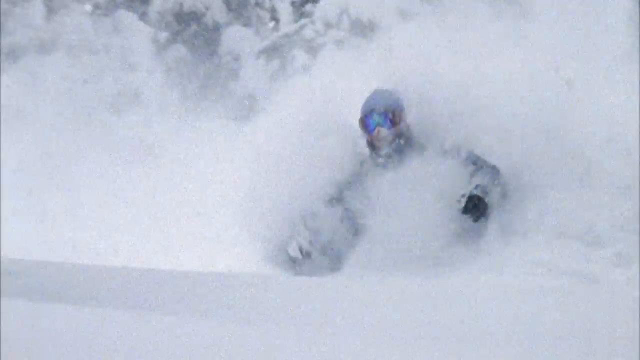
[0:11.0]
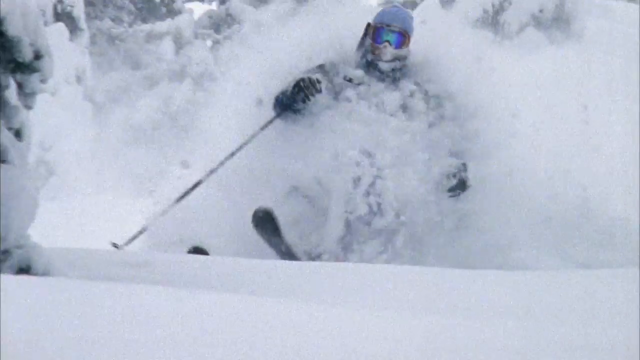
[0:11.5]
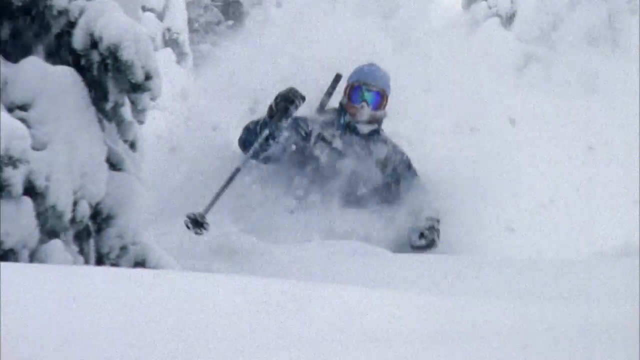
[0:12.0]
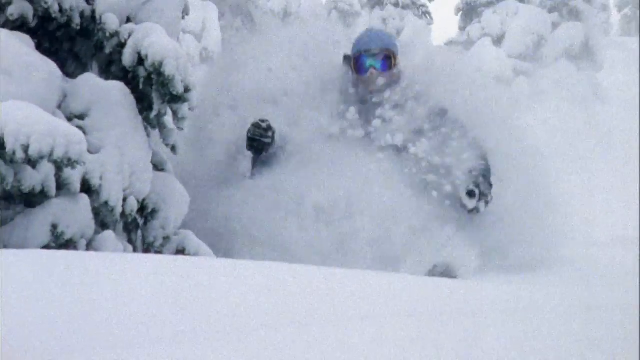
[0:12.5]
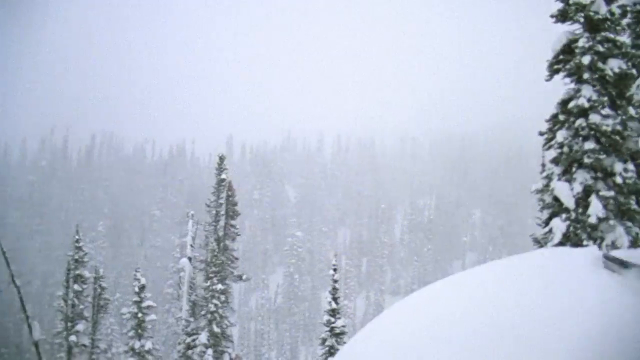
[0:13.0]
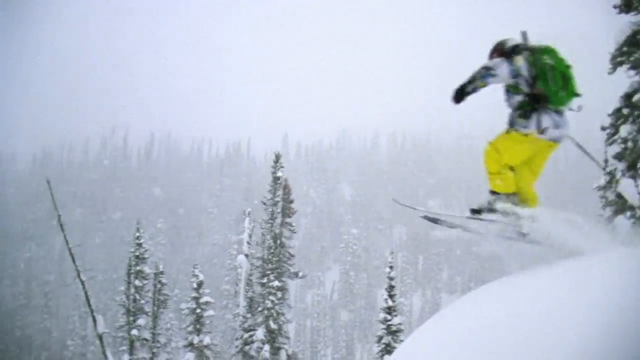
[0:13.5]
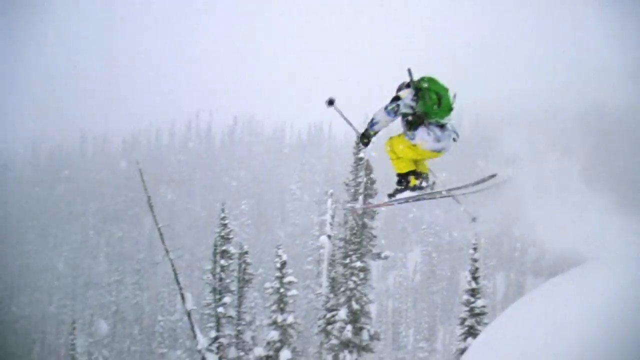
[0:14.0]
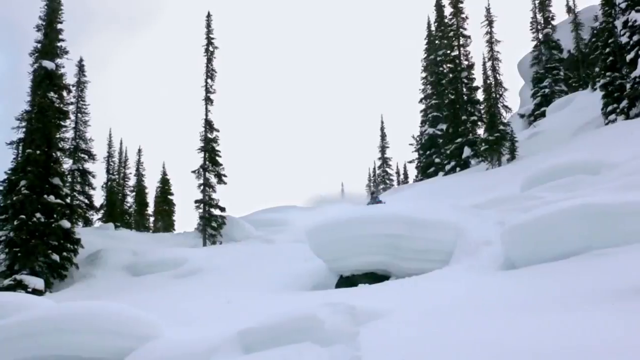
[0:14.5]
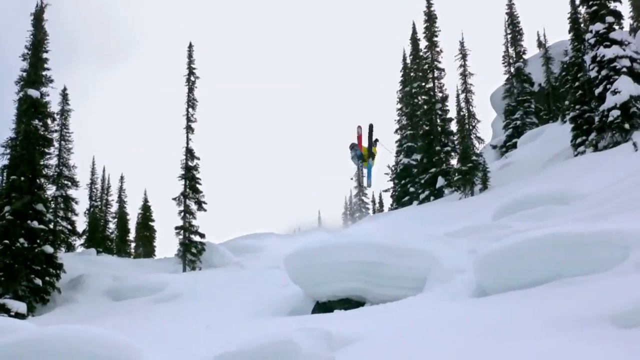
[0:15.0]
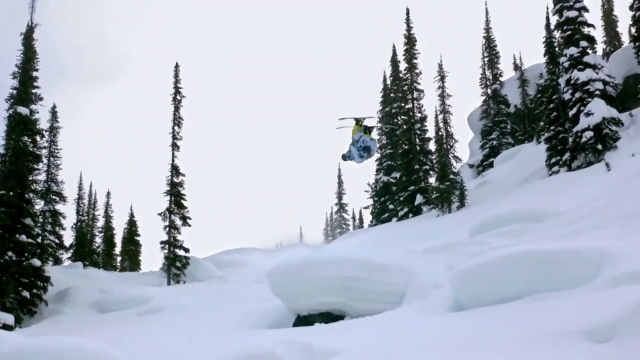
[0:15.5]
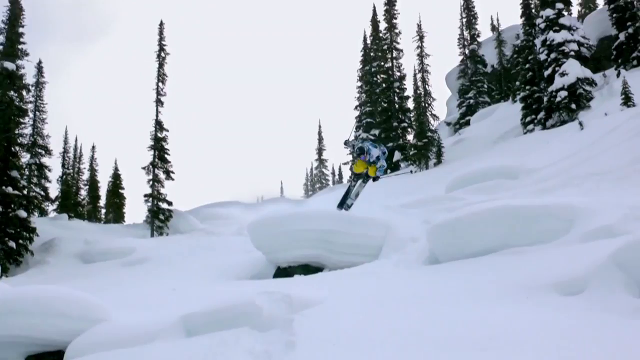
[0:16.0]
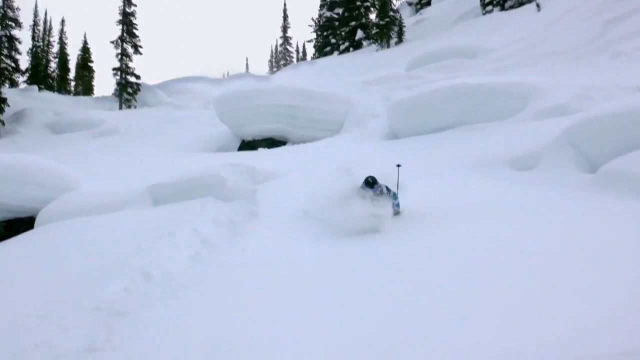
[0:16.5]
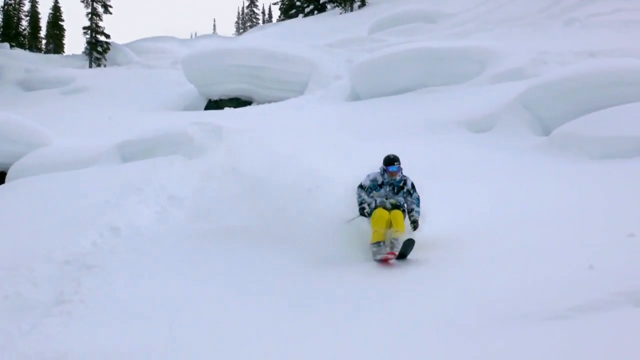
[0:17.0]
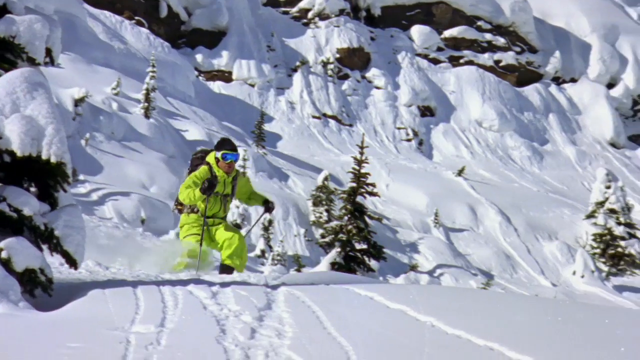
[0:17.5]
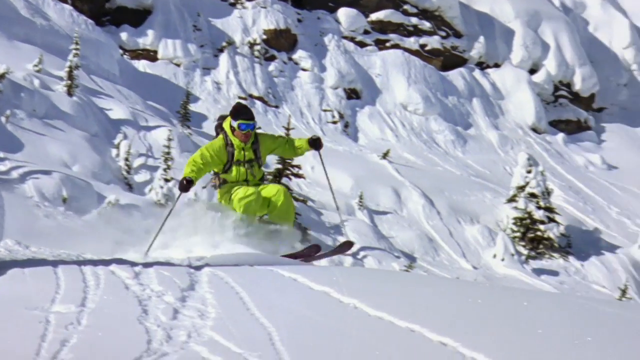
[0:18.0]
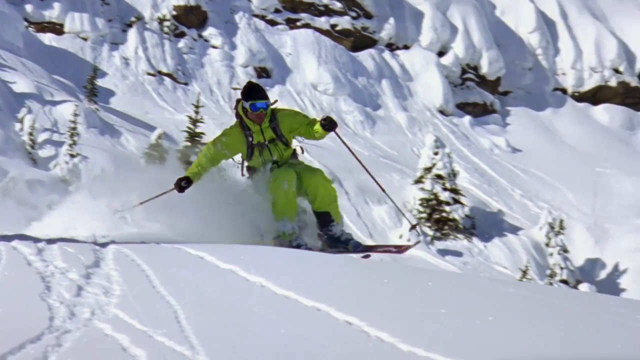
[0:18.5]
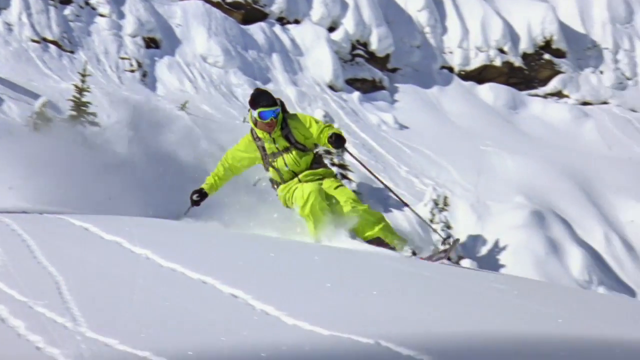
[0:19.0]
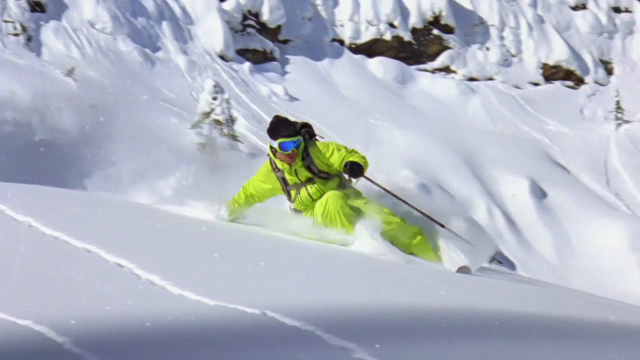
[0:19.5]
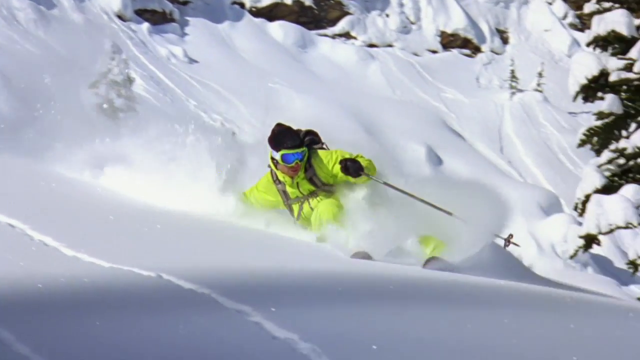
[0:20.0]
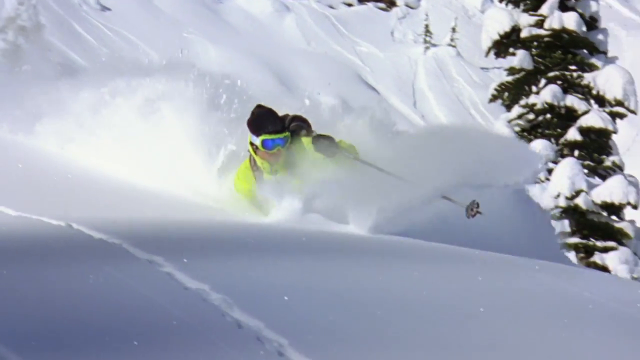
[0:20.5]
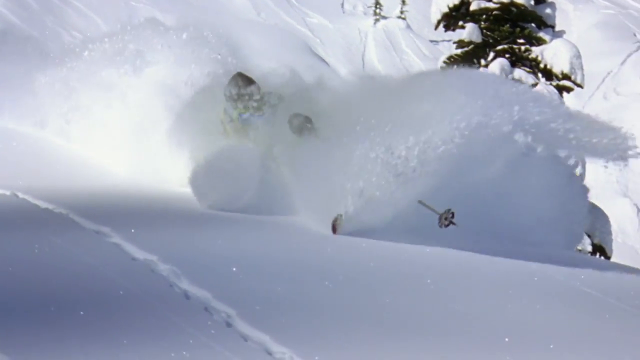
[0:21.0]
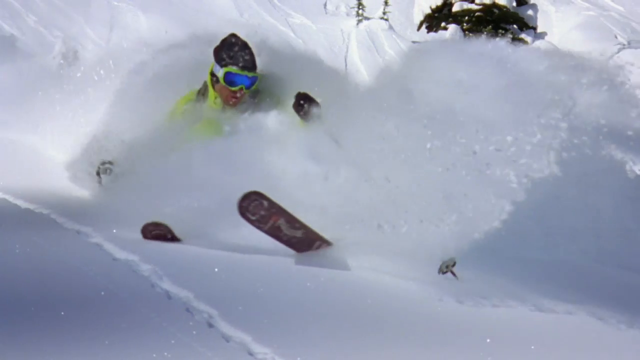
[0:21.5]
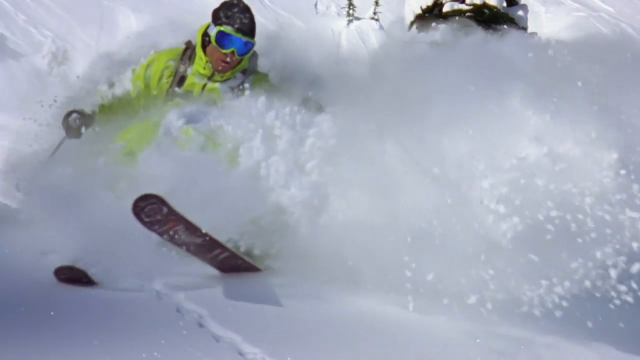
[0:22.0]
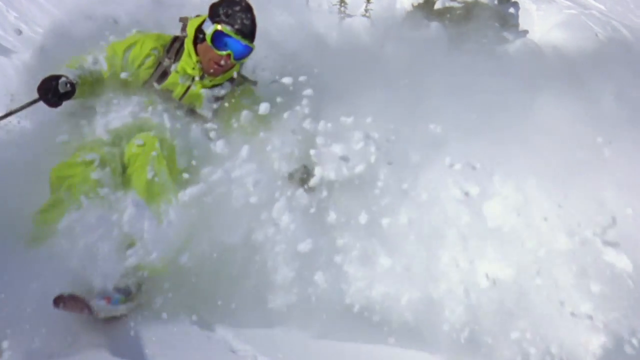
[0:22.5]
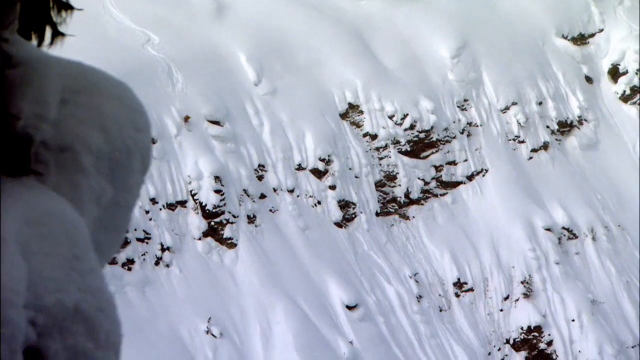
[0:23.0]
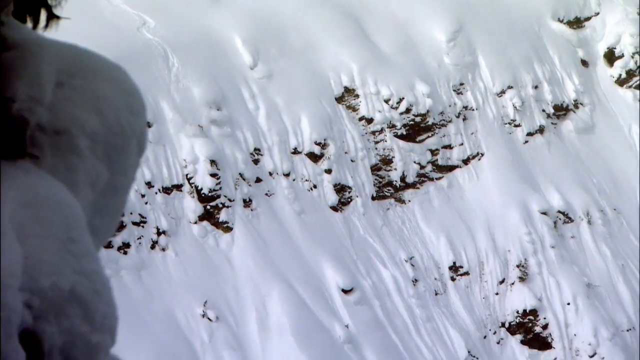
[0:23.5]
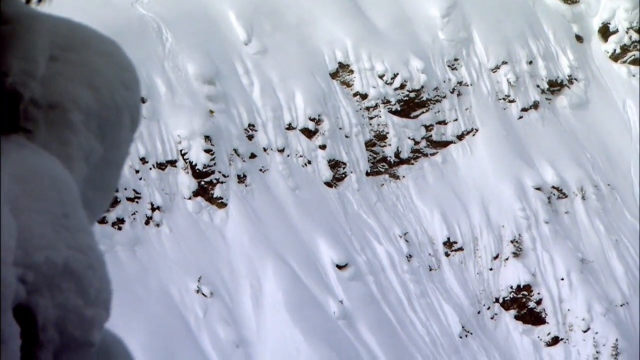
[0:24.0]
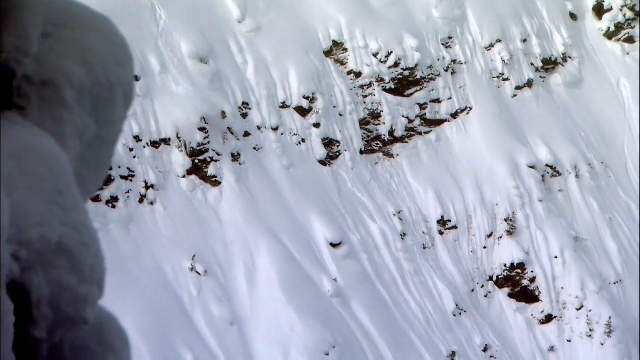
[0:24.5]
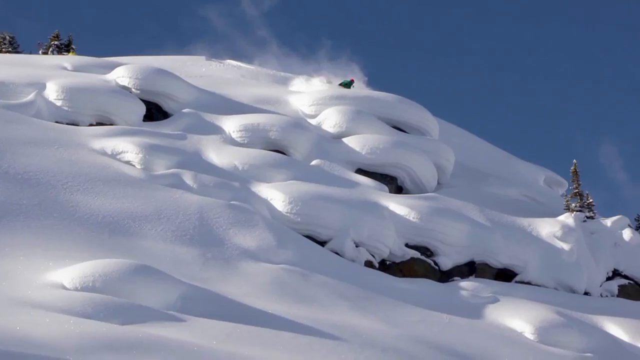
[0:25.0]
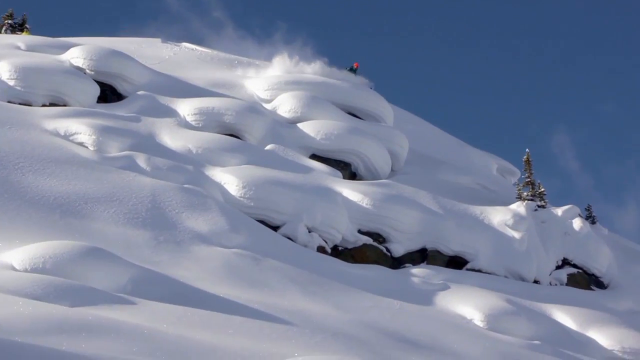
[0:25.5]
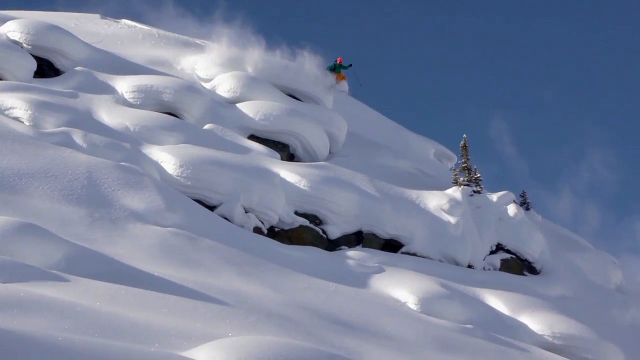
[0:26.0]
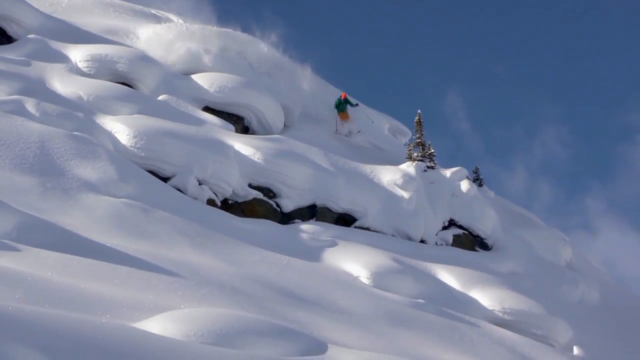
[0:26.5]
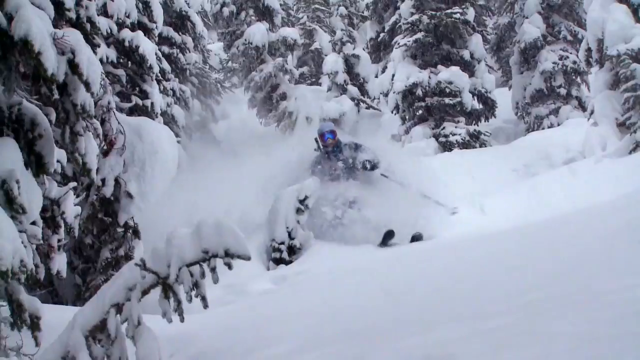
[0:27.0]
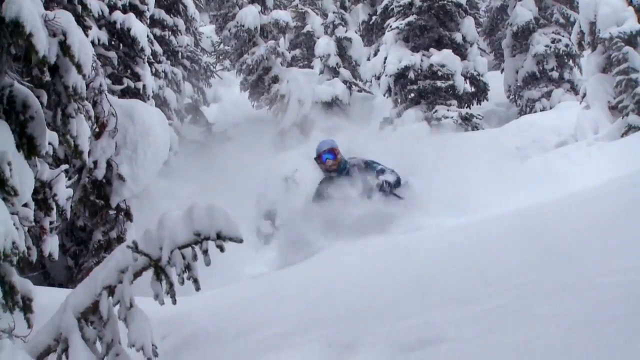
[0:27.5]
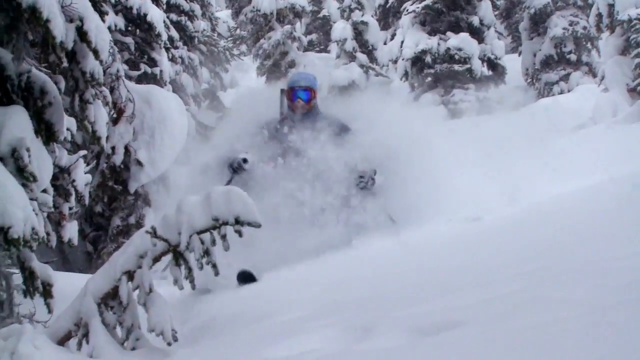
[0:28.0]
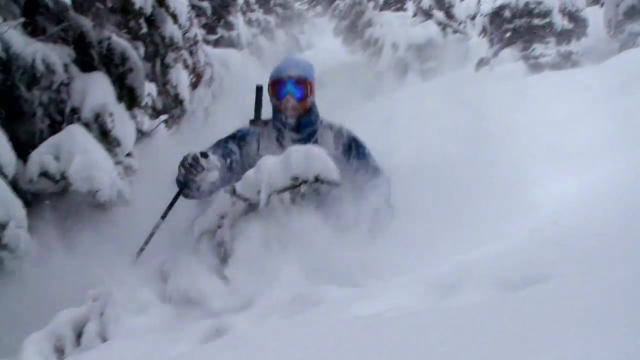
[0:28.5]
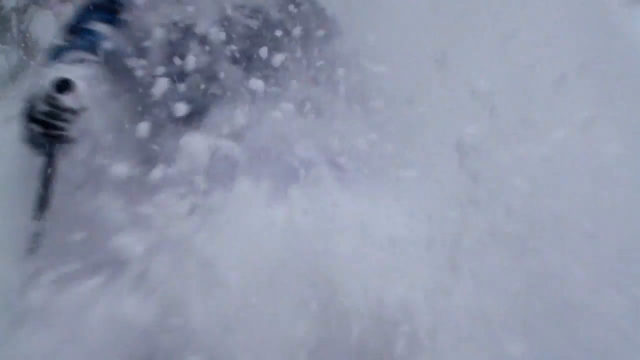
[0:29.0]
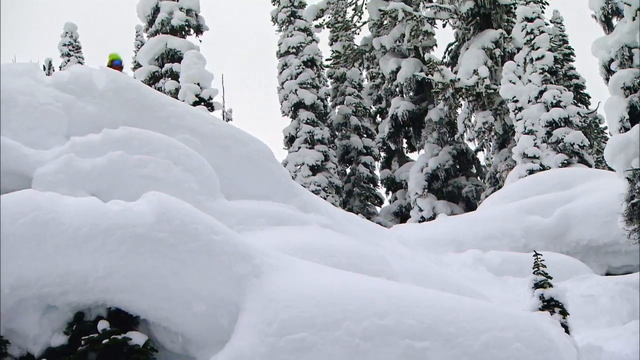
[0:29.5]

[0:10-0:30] Someone skis through the snow, apparently coming down a hill. They wear a blue visor over their face and hold a ski stick in each hand to help them navigate through the snow. Snow crashes against their body and gets kicked up into the air. In the next shot, a skier jumps off a cliff from right to left, wearing yellow pants, a white jacket and a green backpack; as they jump, the ski sticks are pushed behind them. The same skier then does a backflip off a jump and lands. Next, a different skier in an all neon green suit with a blue visor and a black beanie goes down a hill in slow motion, moving to their left with their toes pointed to the right at about a 45-degree angle, seemingly to brace and slow themselves down and to turn to the right. Another skier is then seen from really far away going down the snowy mountain, so small they look like an ant. Then another skier jumps off a cliff going down the mountain; the snow looks very soft and gets kicked up into the air as they go down and jump. Next, someone with a blue visor on their face skis down the hill toward the camera, kicking up snow. Then someone jumps off a little cliff from left to right.